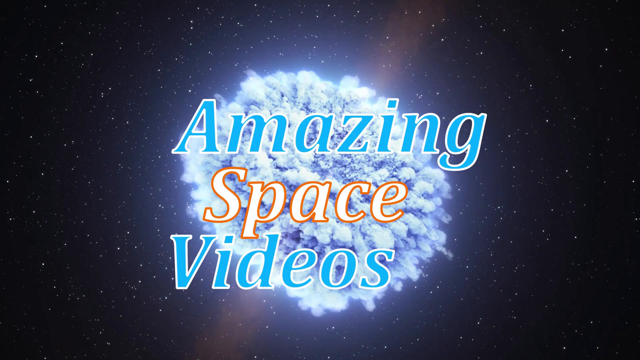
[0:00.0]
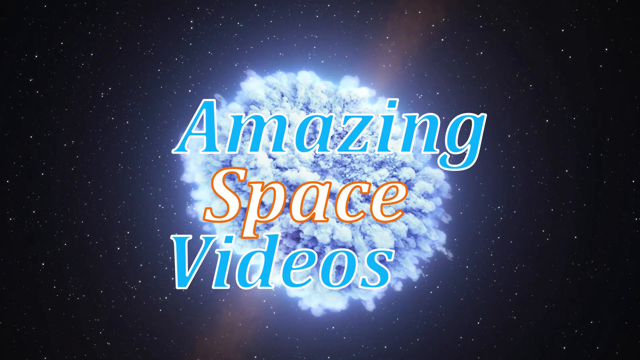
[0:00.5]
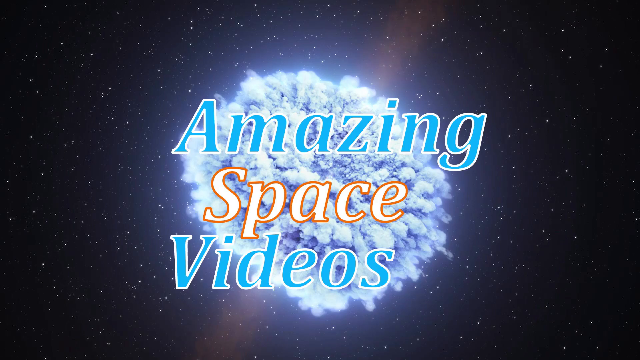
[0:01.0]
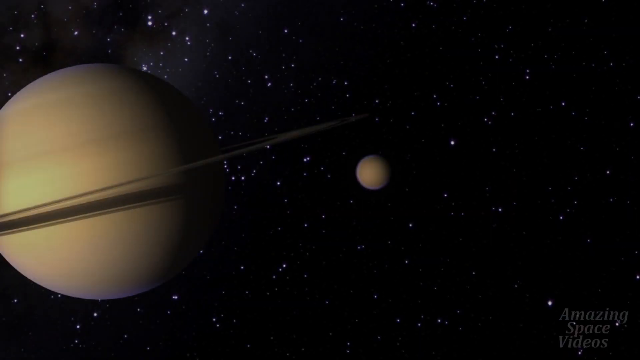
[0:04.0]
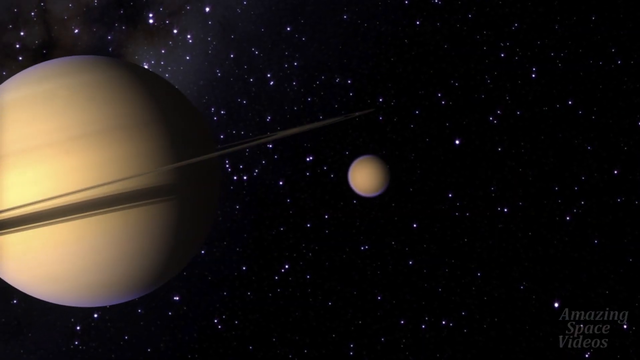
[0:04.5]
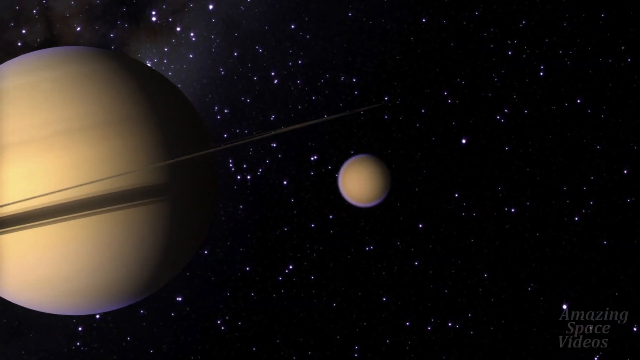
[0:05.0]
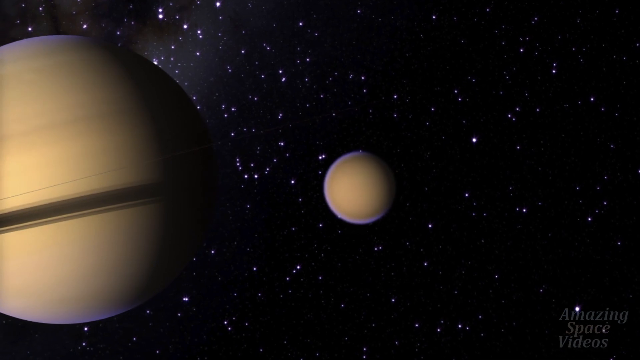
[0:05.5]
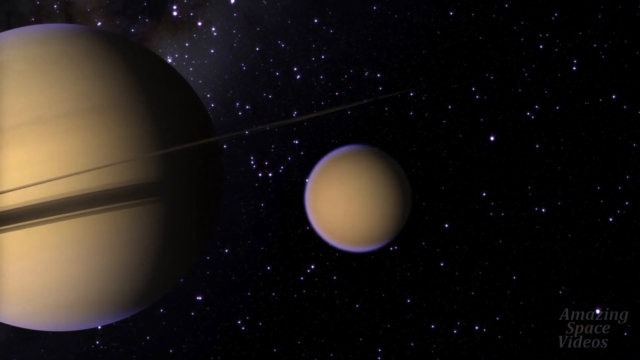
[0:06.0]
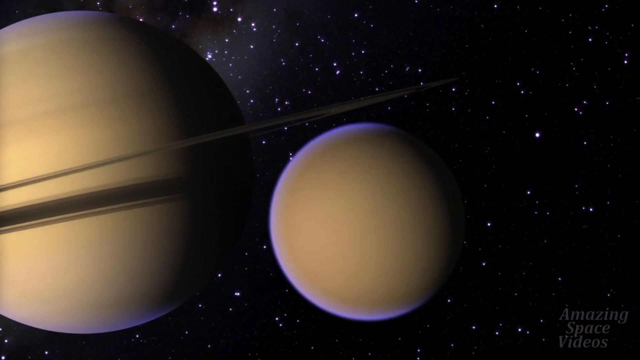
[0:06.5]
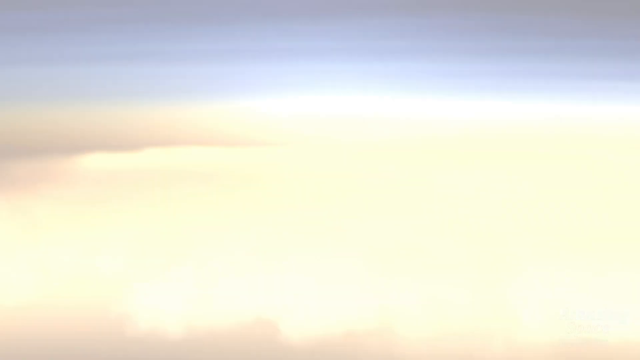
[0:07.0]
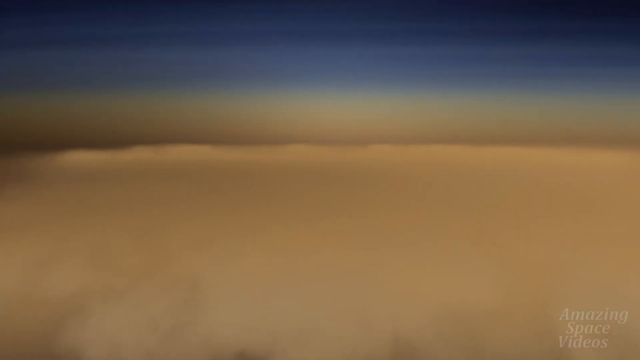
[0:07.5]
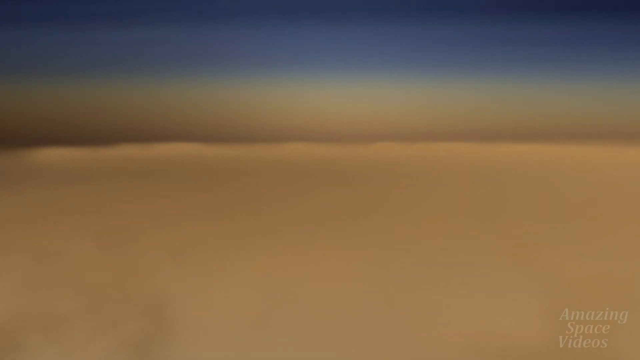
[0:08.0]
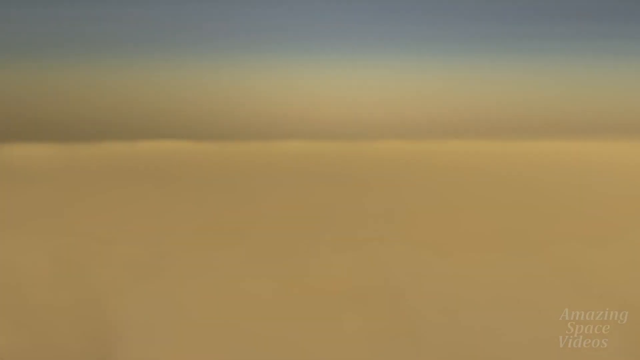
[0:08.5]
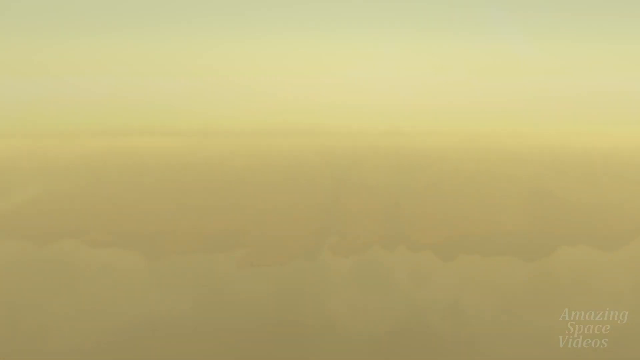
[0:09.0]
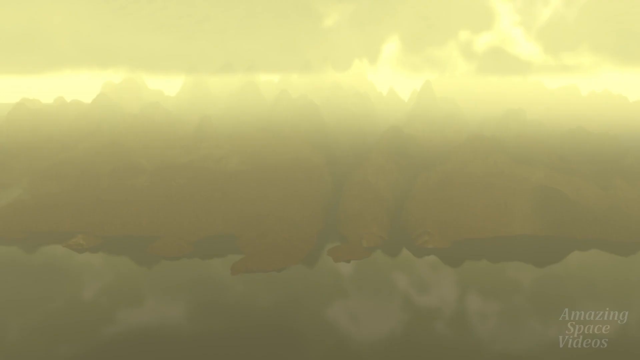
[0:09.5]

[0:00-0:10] The video opens on a screen with a background view of space showing various distant stars, with a white cloud in the center. Text in the foreground reads "amazing space videos". The screen cuts to black for a few seconds. Next comes a rendition of a large planet with a ring of debris around it. The view starts zooming in on a tan-colored moon orbiting the planet. The screen quickly flashes white, as if approaching the moon's atmosphere. The zoom continues, showing a large tan-colored cloud, and keeps zooming in further.